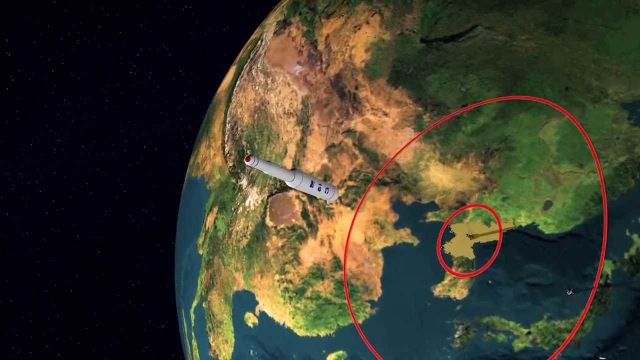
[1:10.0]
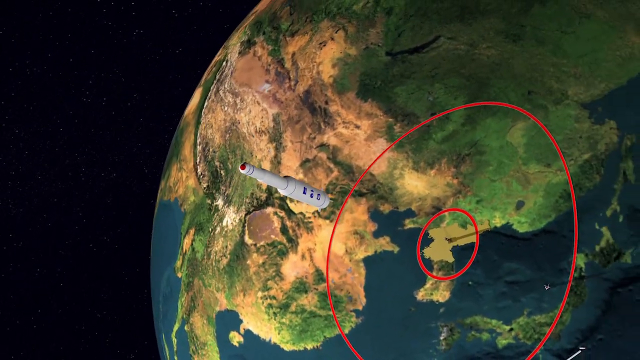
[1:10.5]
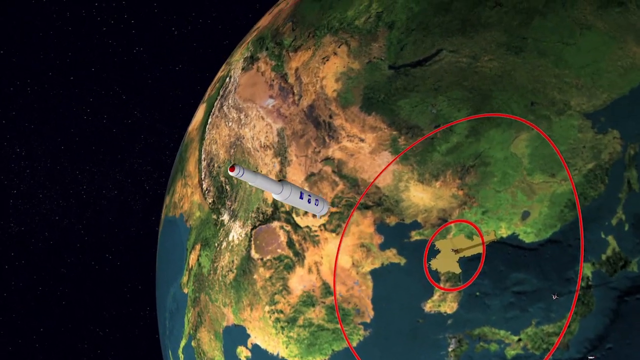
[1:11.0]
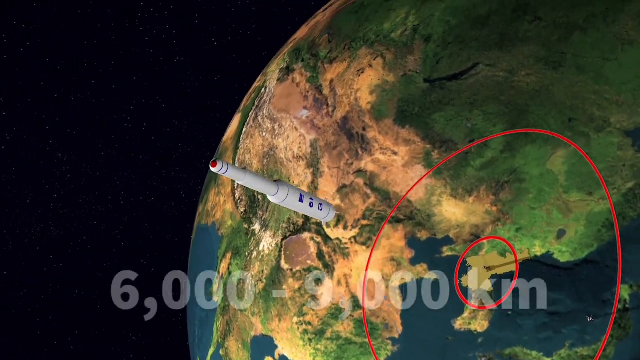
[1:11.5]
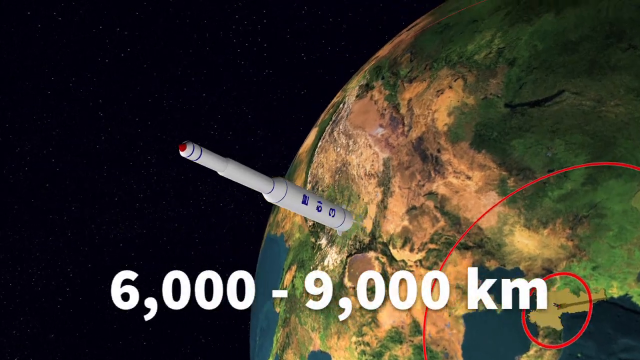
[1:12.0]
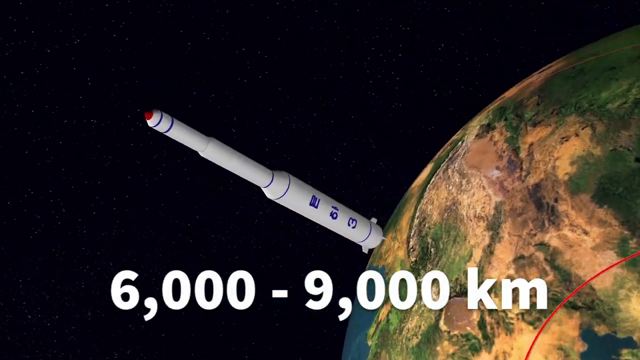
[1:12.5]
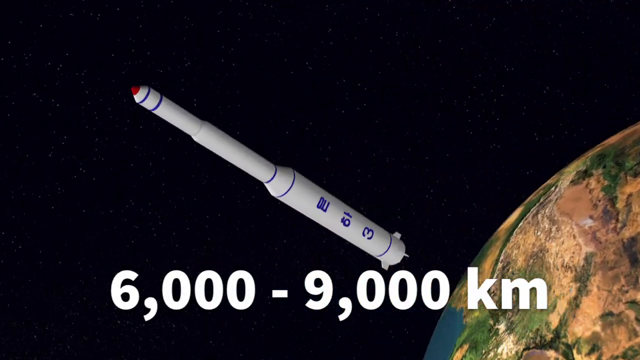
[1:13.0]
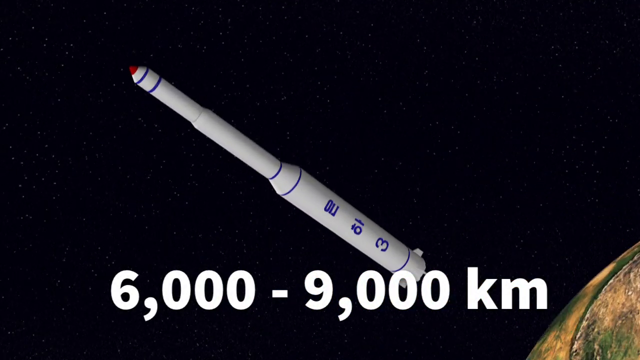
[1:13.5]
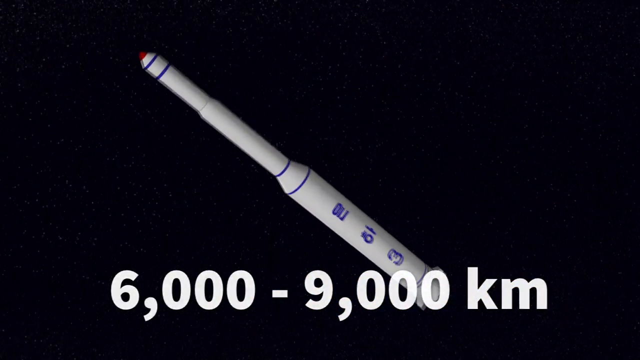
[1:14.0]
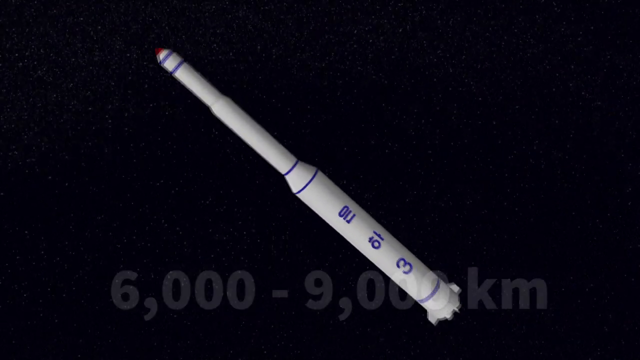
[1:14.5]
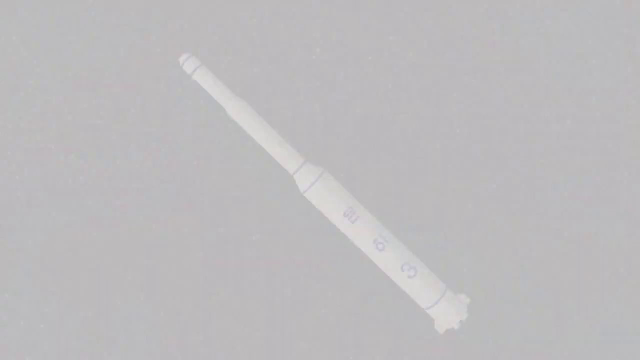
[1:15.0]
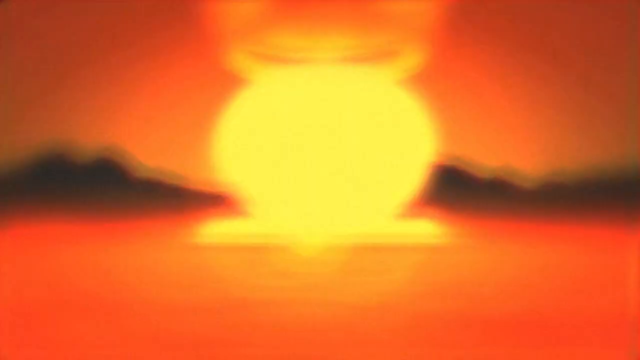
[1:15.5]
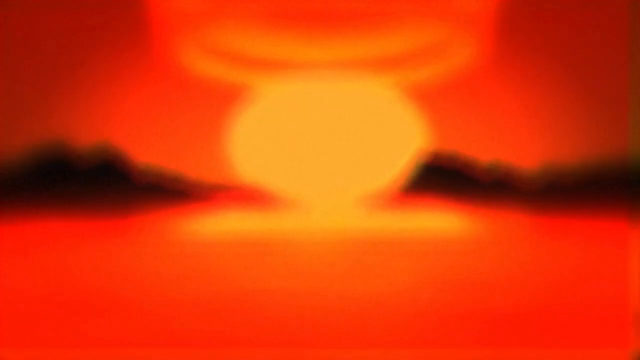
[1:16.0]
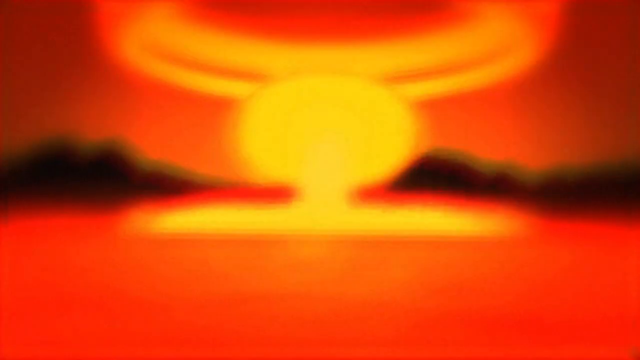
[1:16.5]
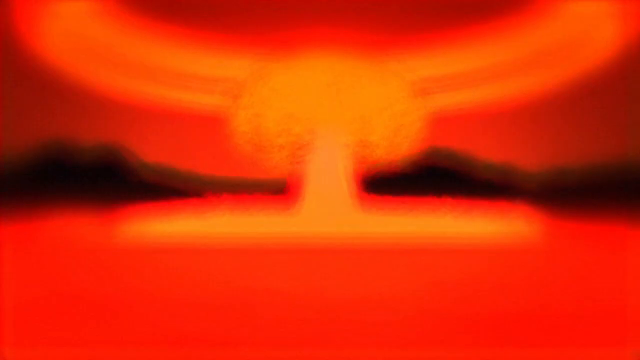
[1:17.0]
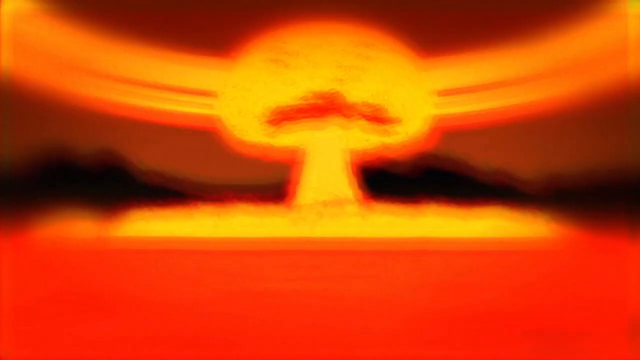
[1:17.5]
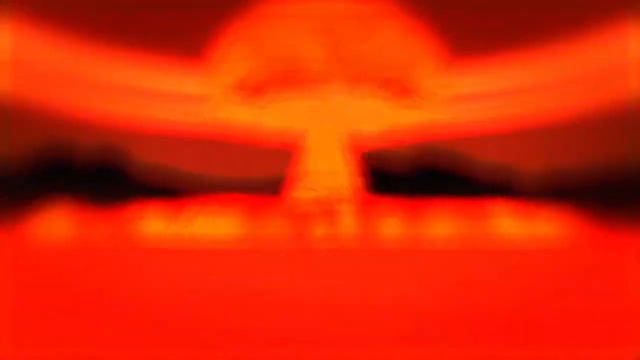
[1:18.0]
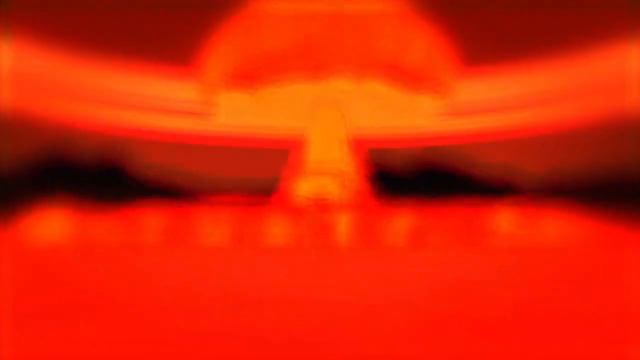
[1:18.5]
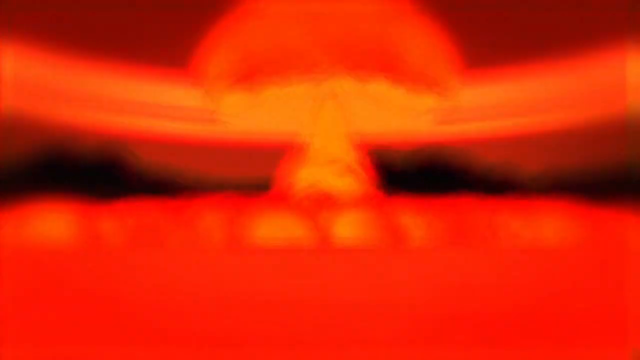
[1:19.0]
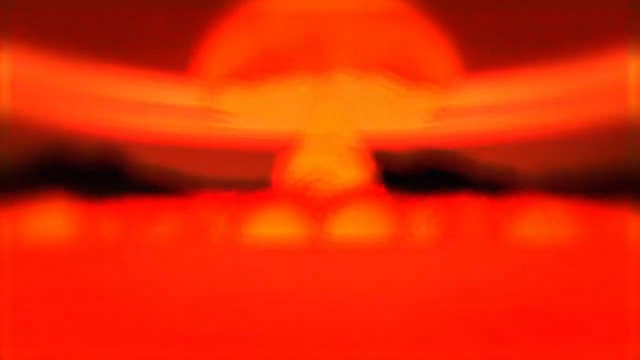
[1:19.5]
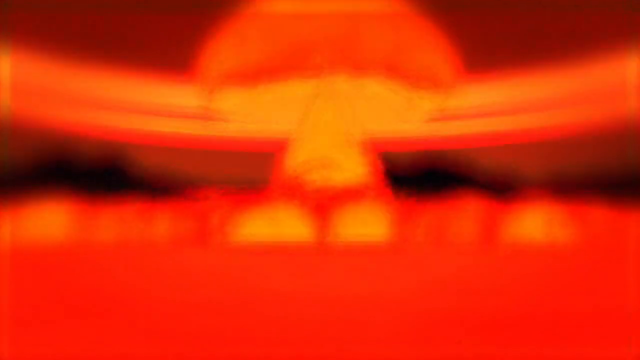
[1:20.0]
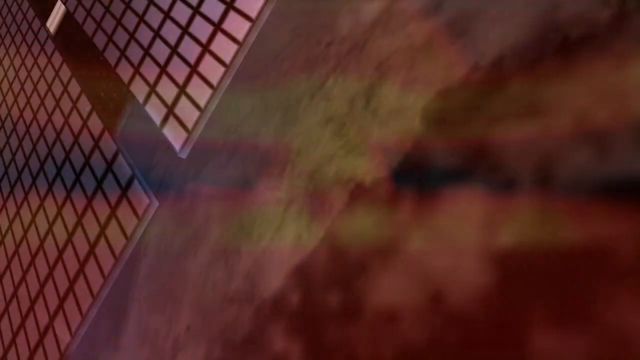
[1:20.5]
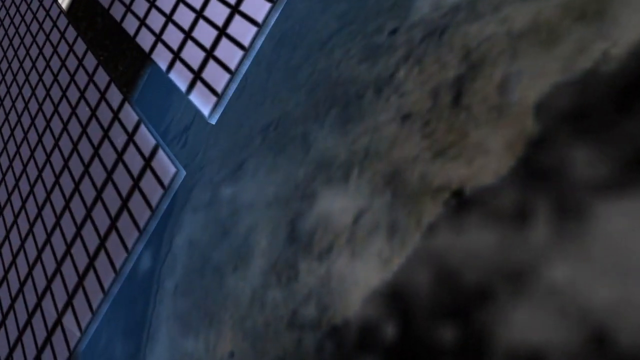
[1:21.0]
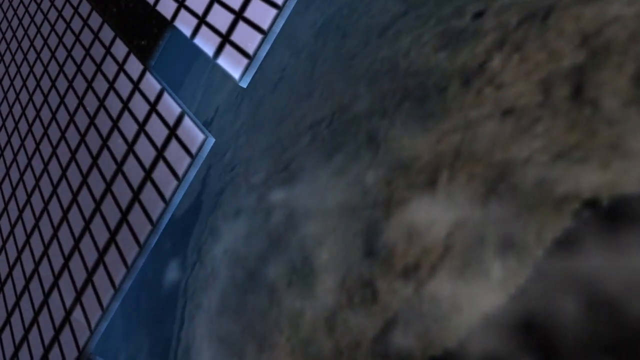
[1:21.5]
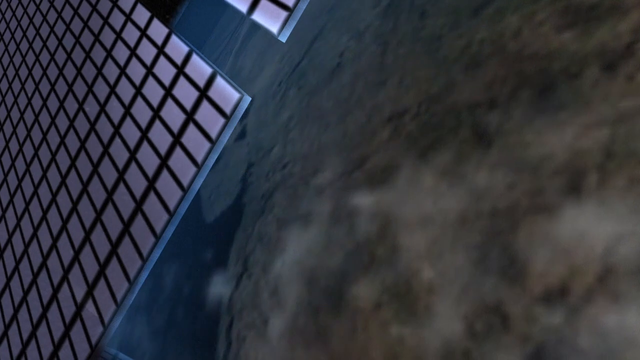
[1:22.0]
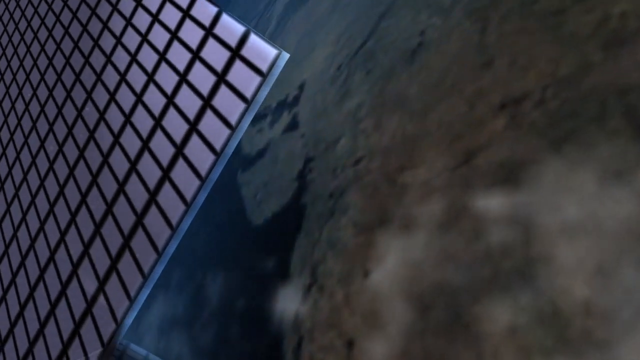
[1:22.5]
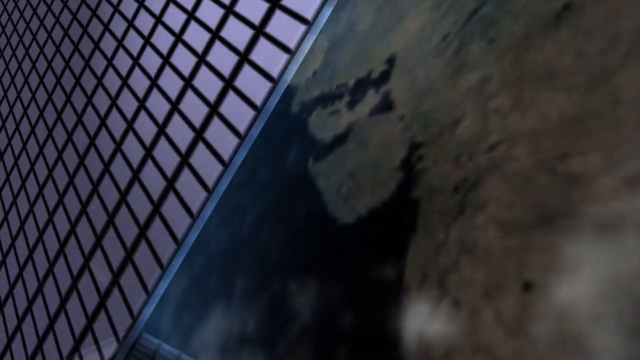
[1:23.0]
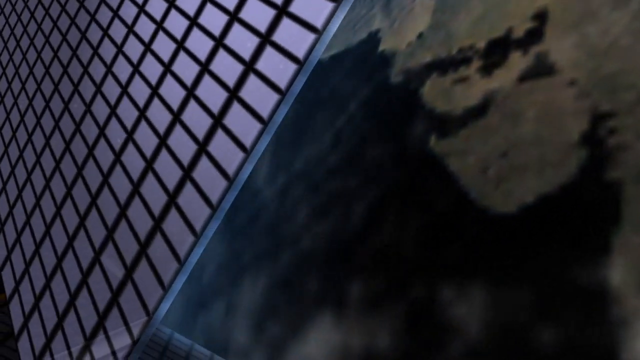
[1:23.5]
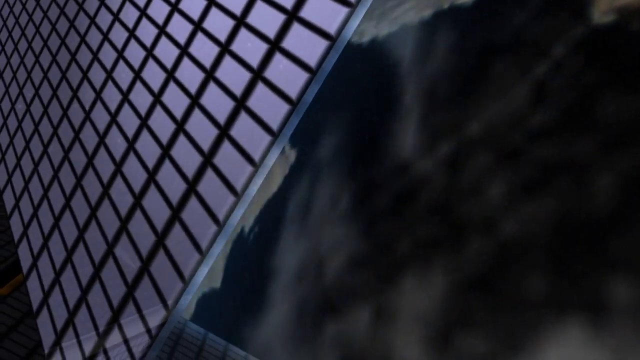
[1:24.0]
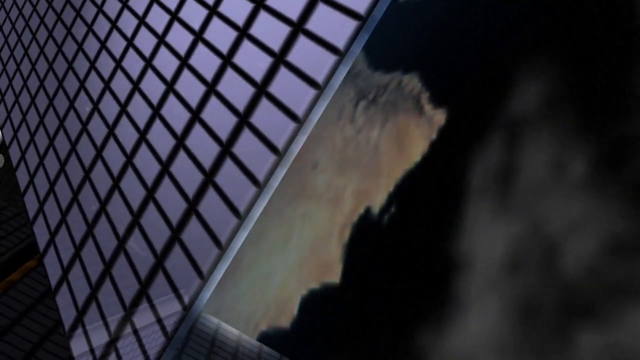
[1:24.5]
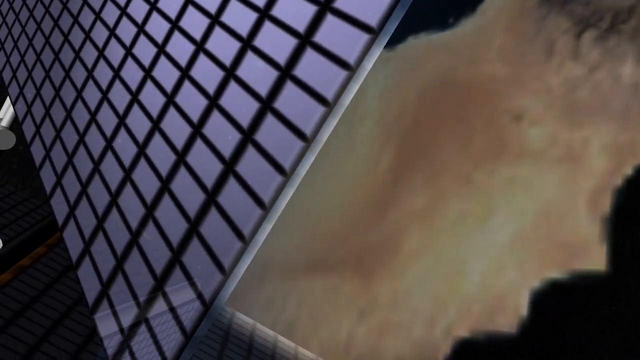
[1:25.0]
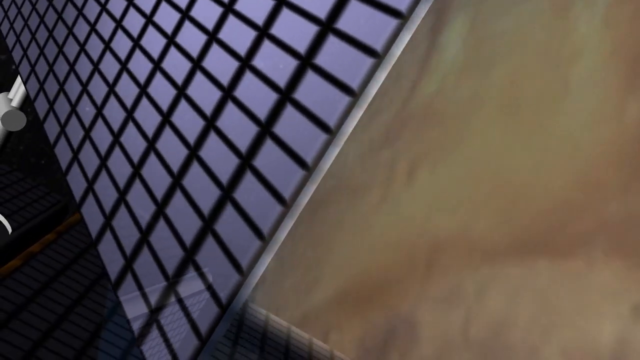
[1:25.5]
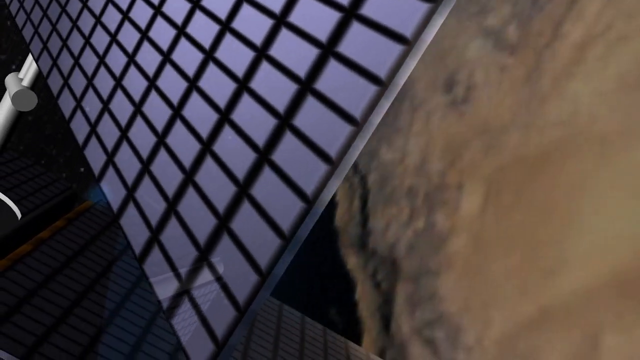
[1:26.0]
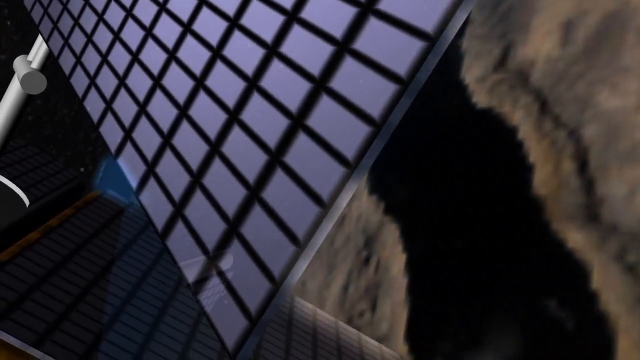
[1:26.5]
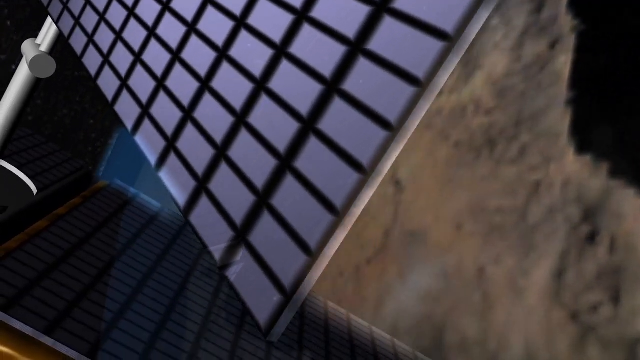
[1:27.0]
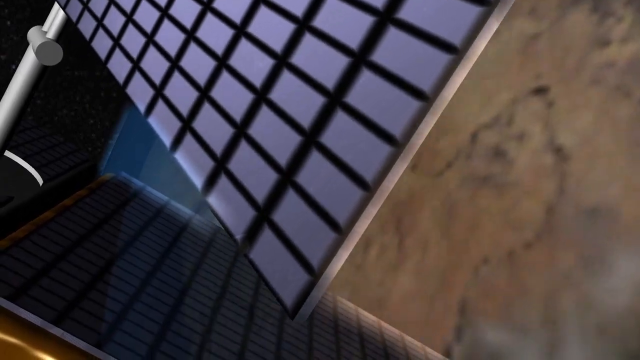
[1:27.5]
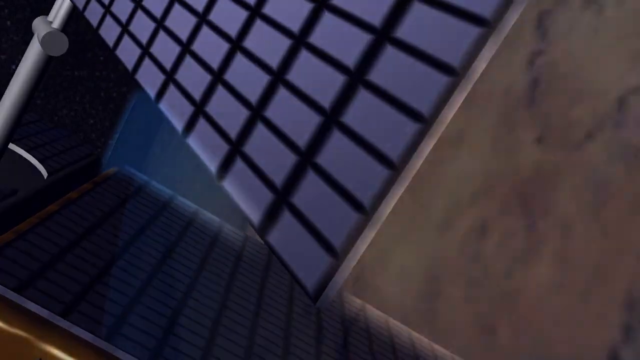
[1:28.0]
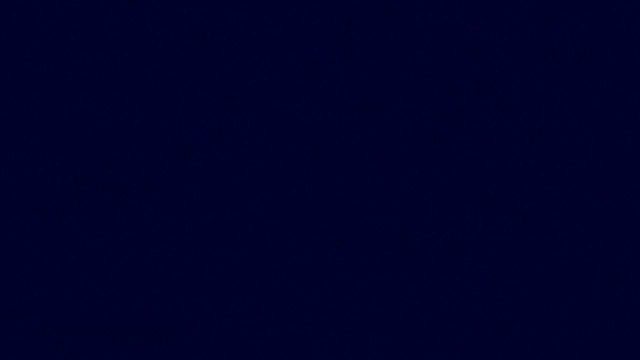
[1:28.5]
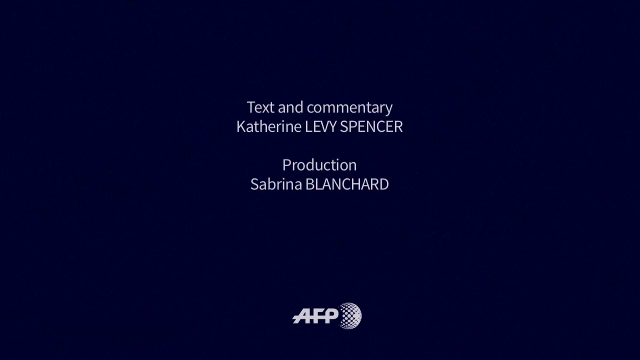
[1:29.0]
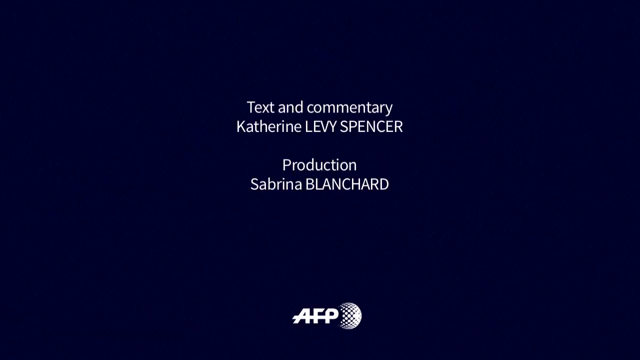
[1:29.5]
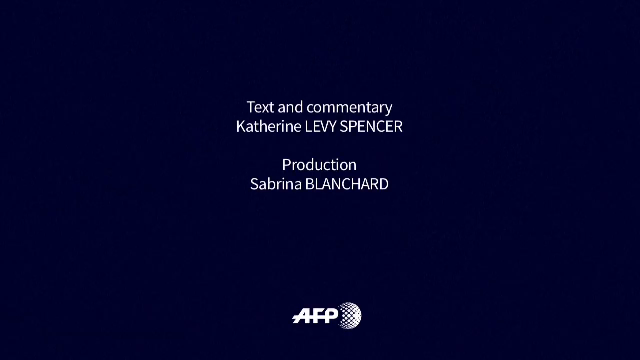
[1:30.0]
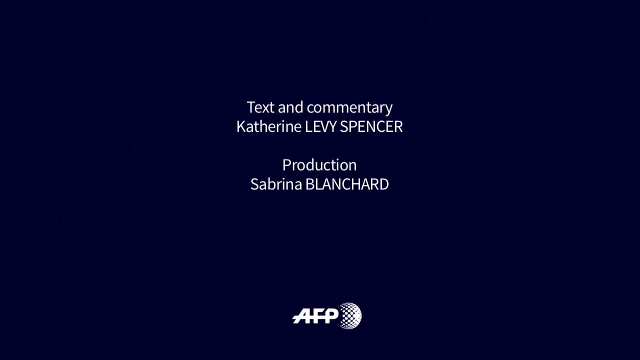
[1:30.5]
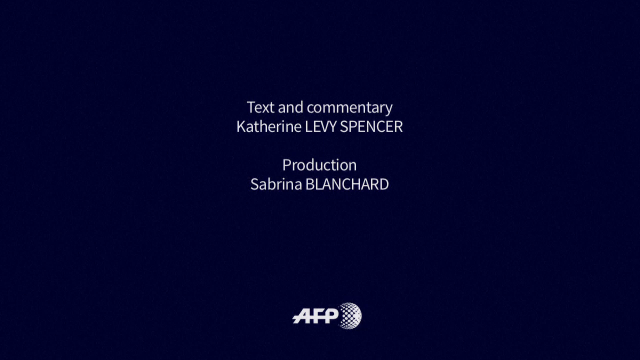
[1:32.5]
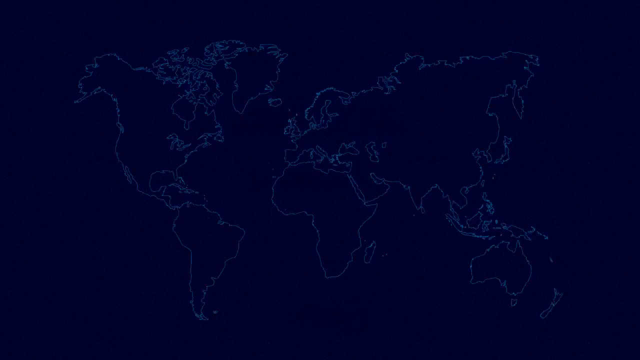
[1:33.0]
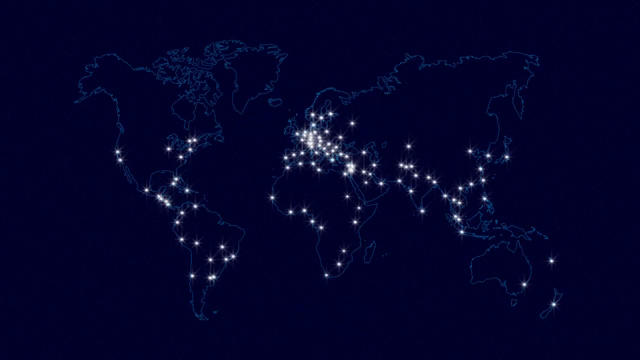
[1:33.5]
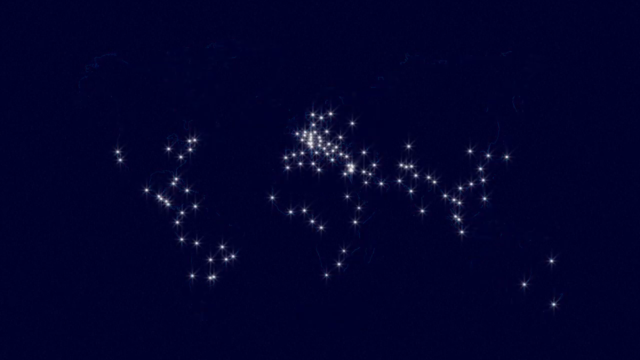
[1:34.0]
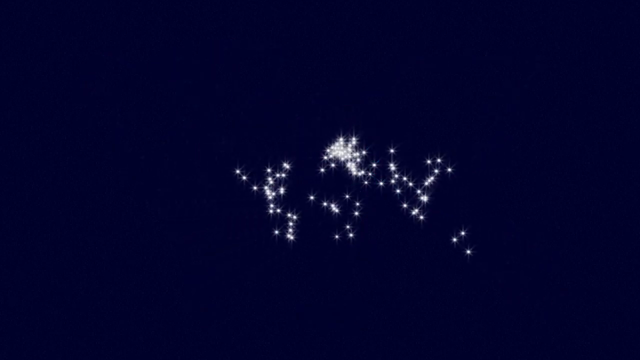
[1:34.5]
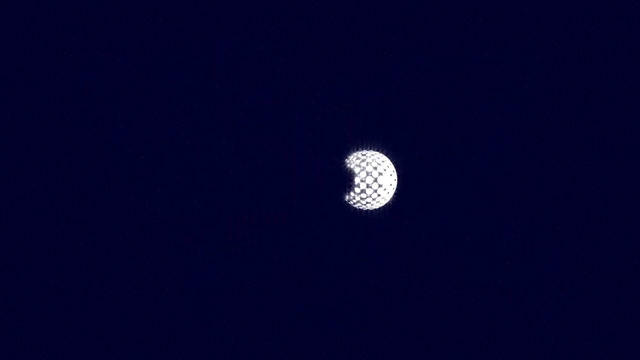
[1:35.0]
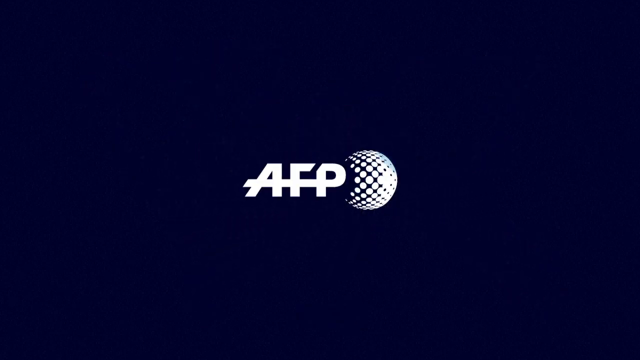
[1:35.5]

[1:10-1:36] After taking off, the rocket is directly above the red circle. It continues on as the screen reads "6,000 to 9,000 kilometers," flying in the Earth's atmosphere. A huge nuclear explosion appears, red with an orange mushroom cloud and a red ring around it. The view moves into space, where a satellite with visible panels is in the sky. At the end, a map of the Earth appears with white dots all around it, followed by an AFP logo with white text on a blue background.